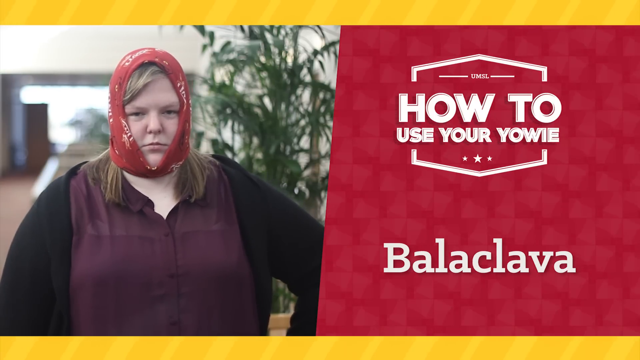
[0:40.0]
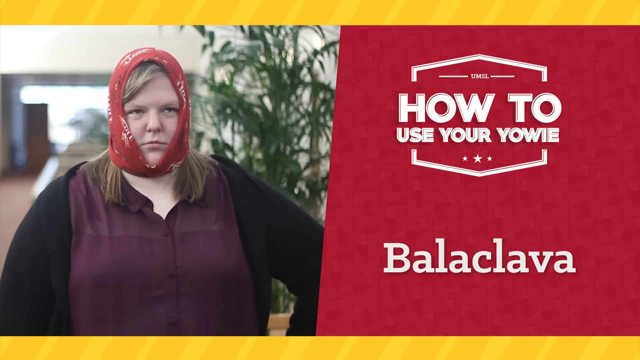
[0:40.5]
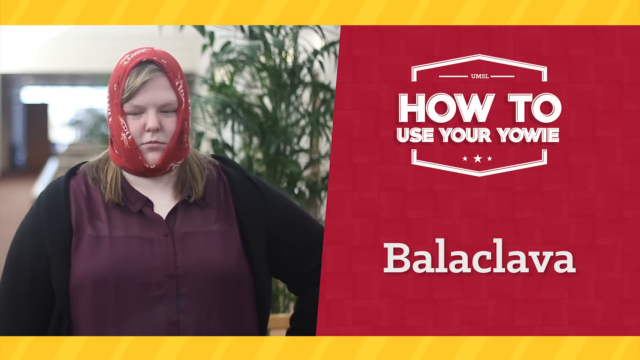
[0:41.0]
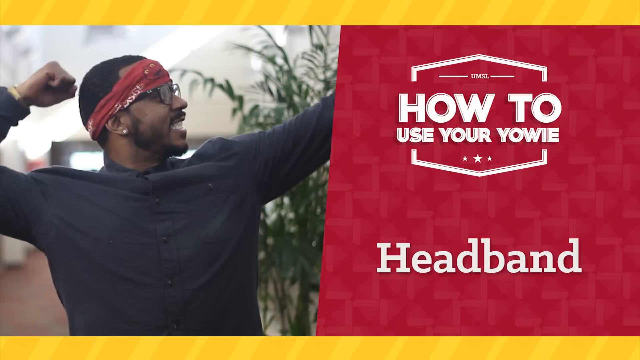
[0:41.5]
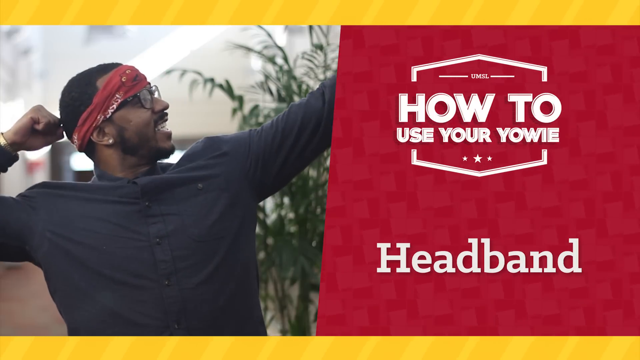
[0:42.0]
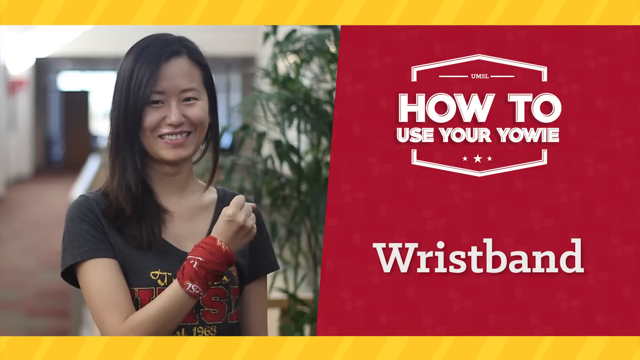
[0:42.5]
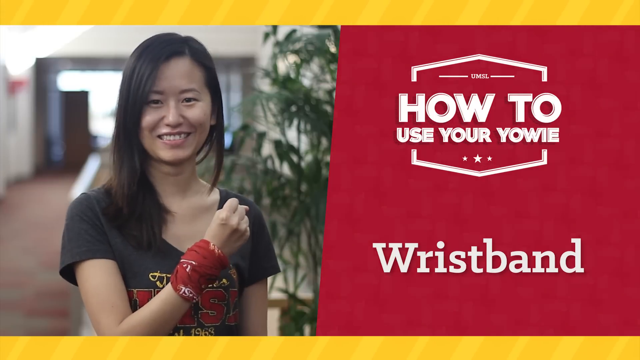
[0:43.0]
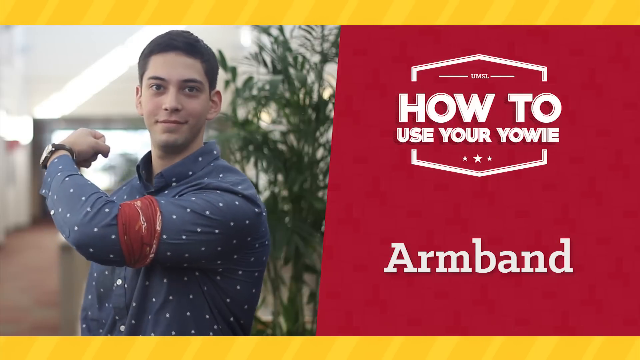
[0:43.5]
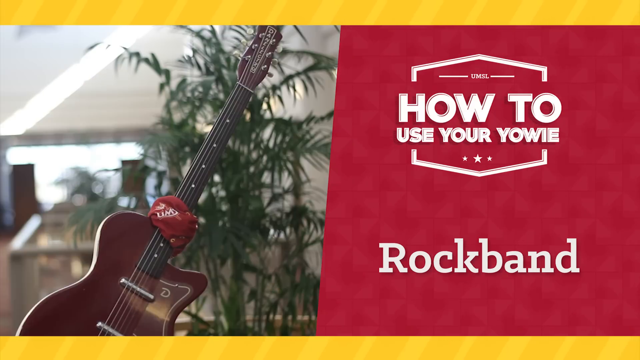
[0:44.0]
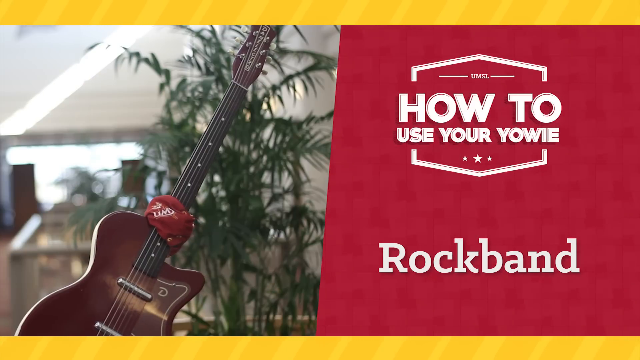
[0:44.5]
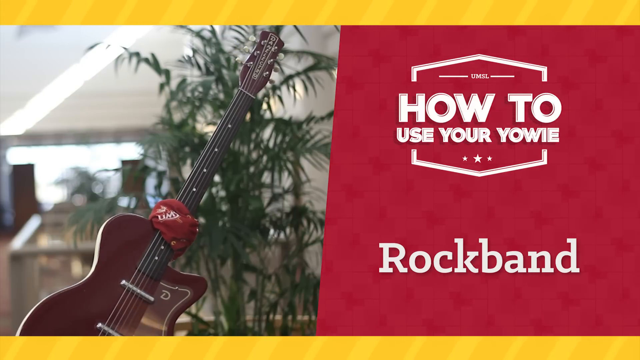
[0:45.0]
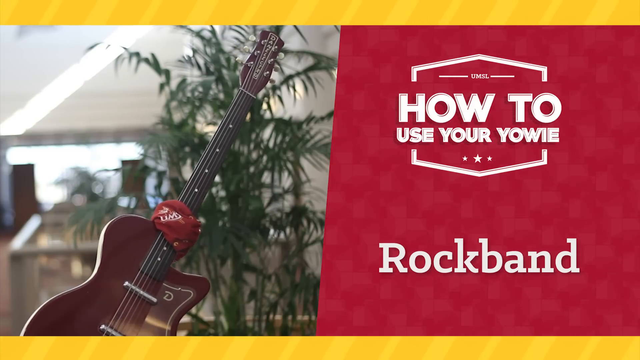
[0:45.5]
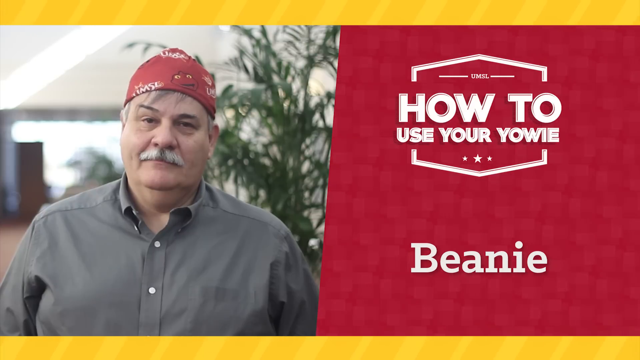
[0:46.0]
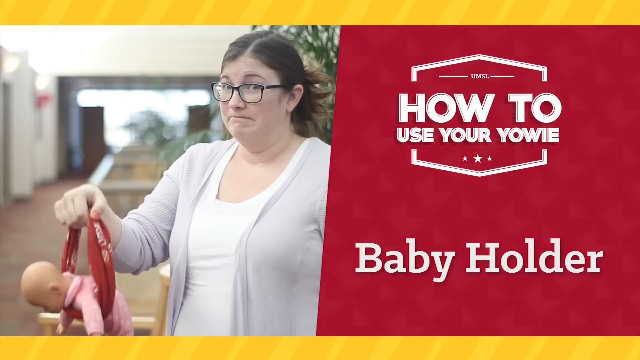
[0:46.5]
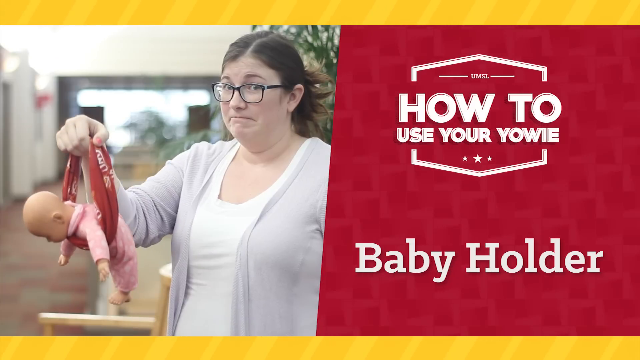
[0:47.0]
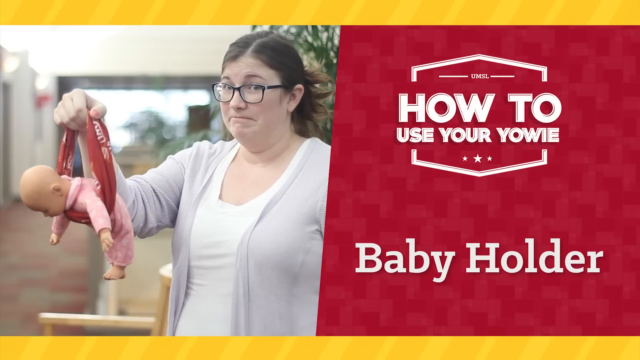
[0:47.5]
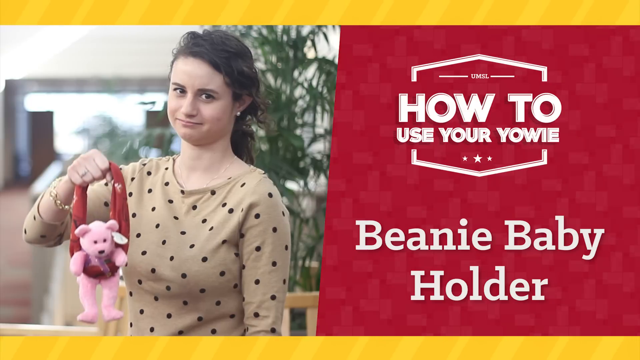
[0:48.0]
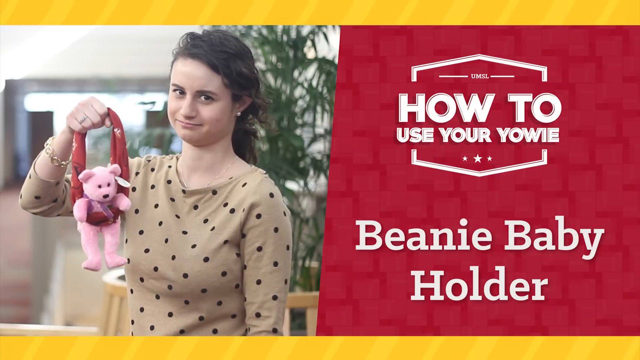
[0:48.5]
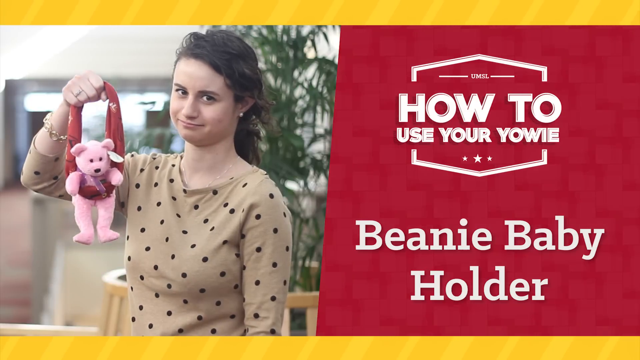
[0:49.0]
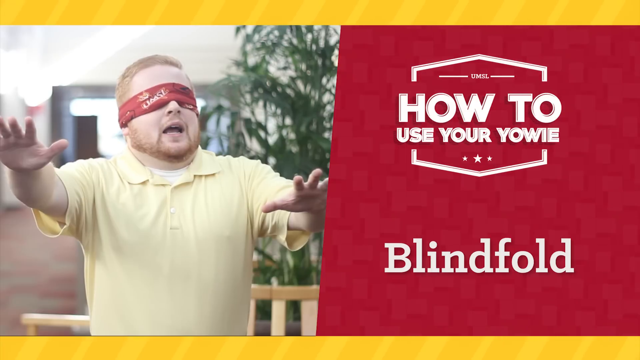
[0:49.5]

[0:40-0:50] A girl in a purple shirt and a black sweater wears the yowie like a headscarf, with text to her right reading "how to use your yowie baklava." Next, a Black boy wearing glasses and a black shirt uses it as a headband. A Chinese girl in a gray shirt that says "QSML" wears it as a wristband. A white guy in a blue polka-dot shirt wears it as an armband up on his forearm. A guitar then appears with the yowie wrapped around its long part, and the text says "rock band." An older man in a gray shirt wears it on his head like a beanie. A girl with glasses has it wrapped around a baby doll, with the text "baby holder." Another girl in a brown top with black polka dots has it wrapped around a beanie baby bear, with the text "beanie baby holder." Finally, a guy in a yellow shirt has it wrapped around his eyes, and the text says "you can use it for a blindfold."